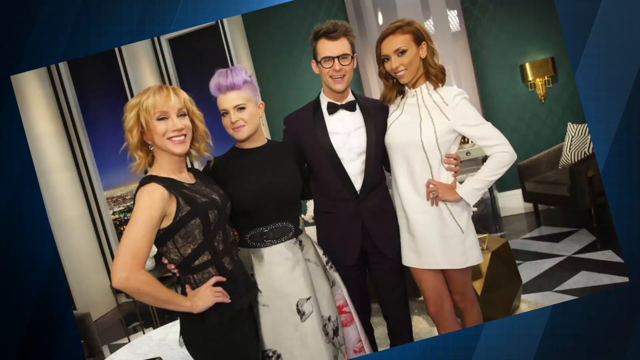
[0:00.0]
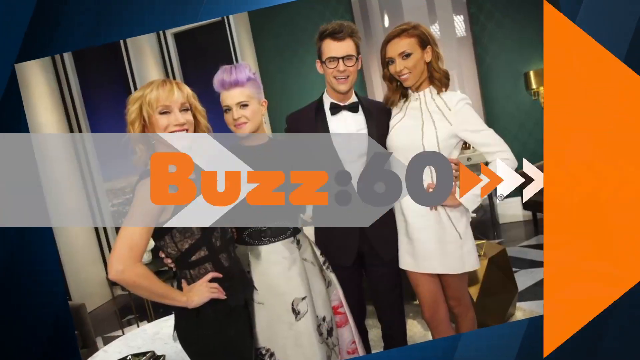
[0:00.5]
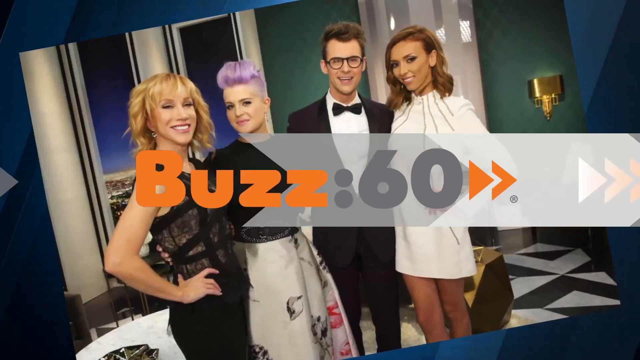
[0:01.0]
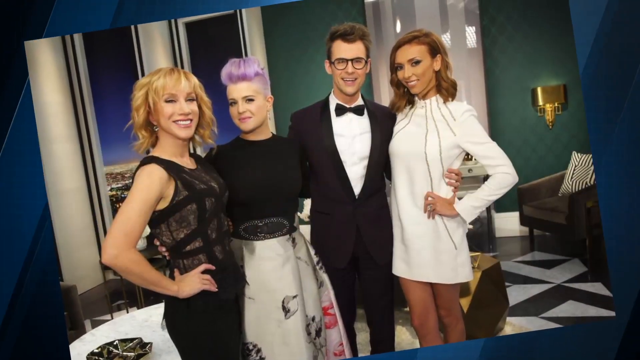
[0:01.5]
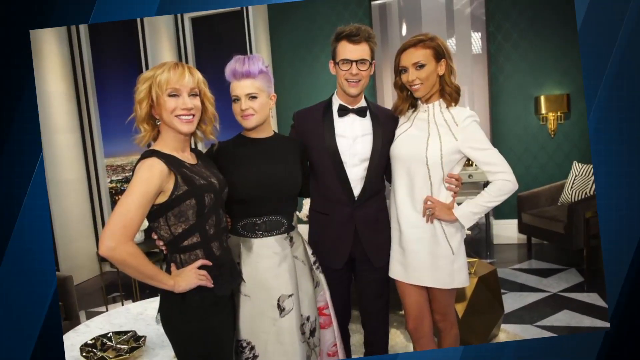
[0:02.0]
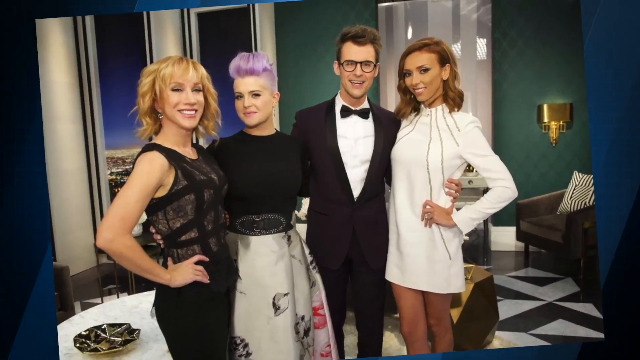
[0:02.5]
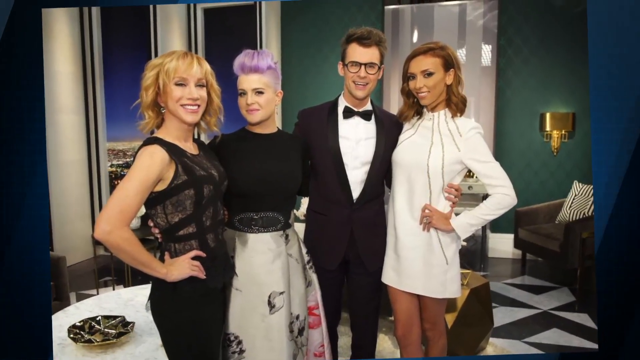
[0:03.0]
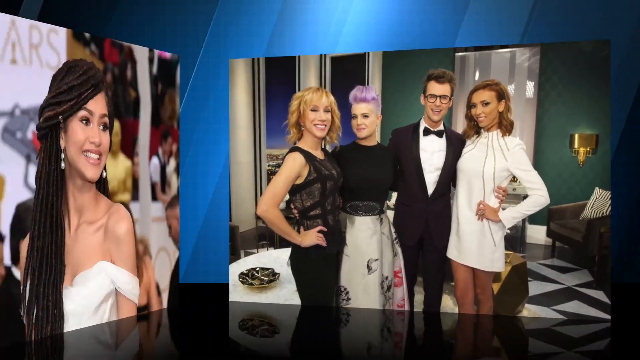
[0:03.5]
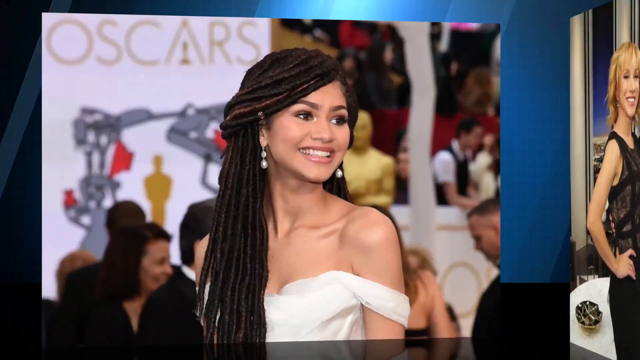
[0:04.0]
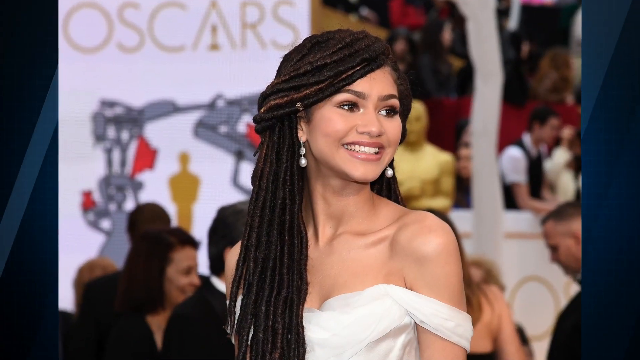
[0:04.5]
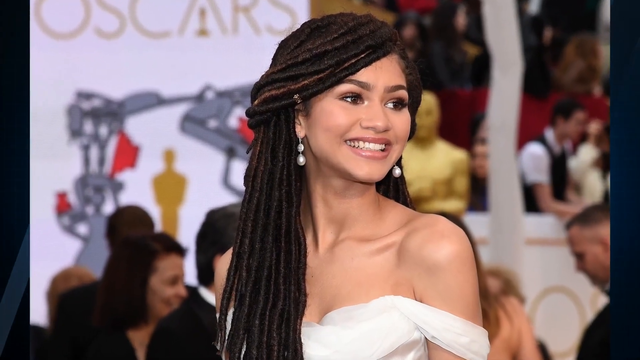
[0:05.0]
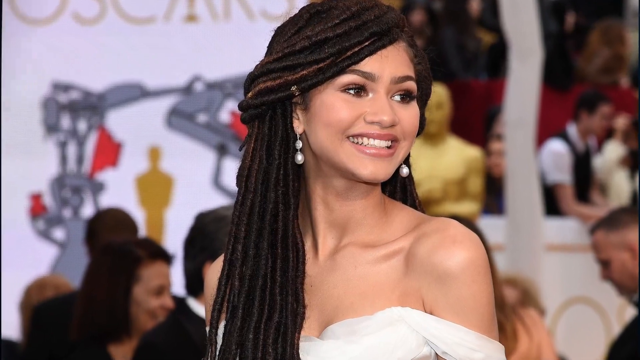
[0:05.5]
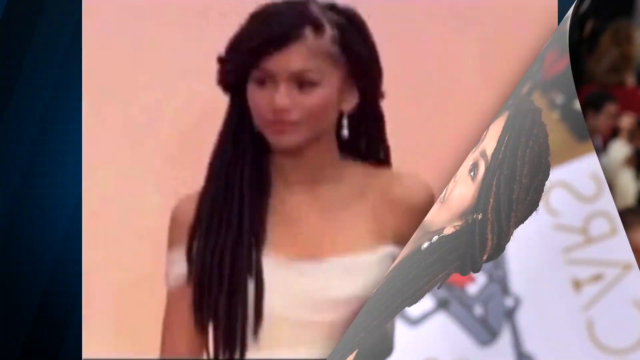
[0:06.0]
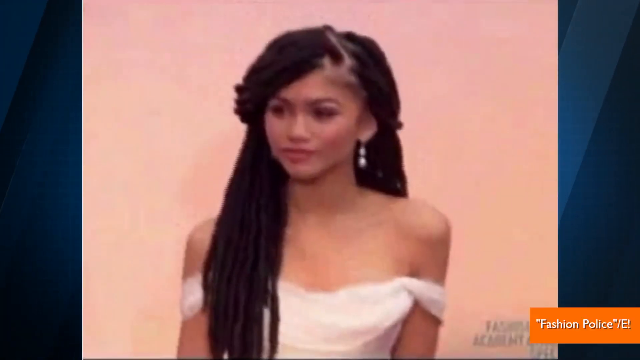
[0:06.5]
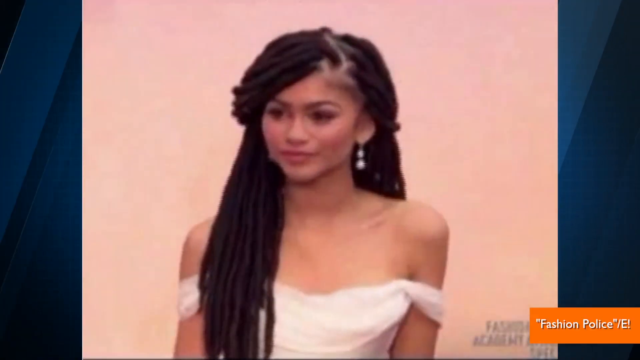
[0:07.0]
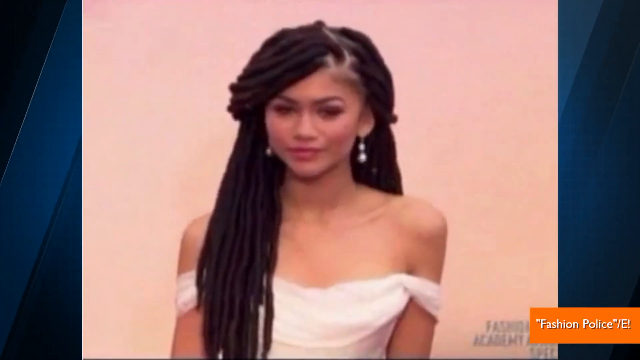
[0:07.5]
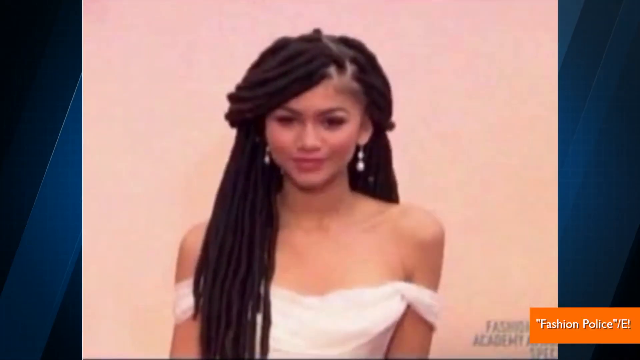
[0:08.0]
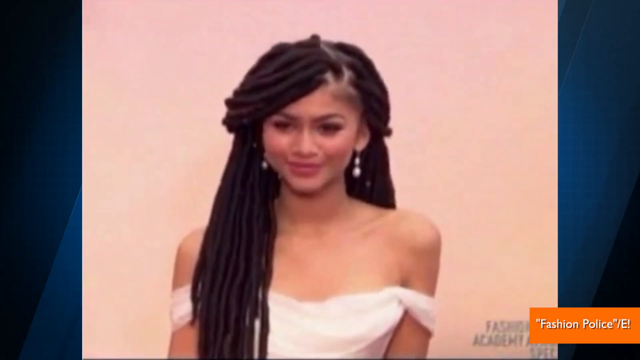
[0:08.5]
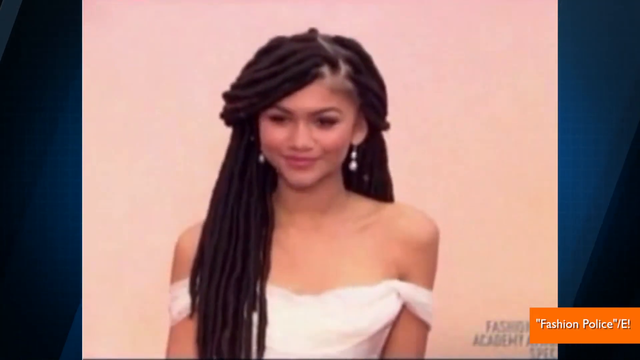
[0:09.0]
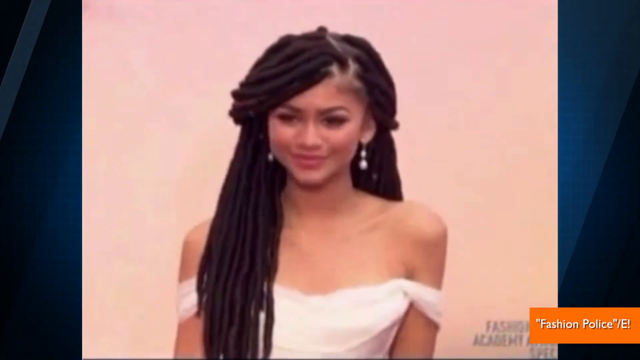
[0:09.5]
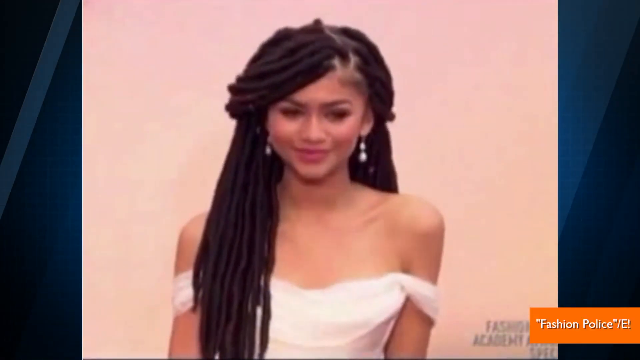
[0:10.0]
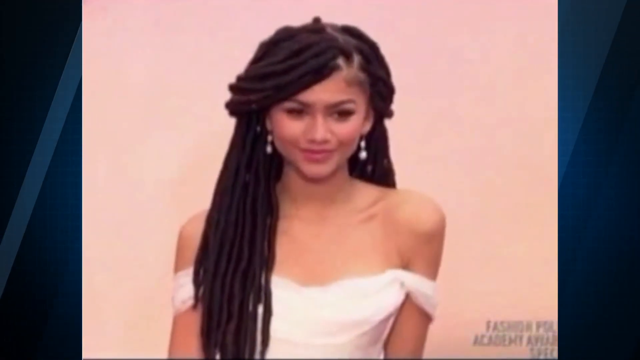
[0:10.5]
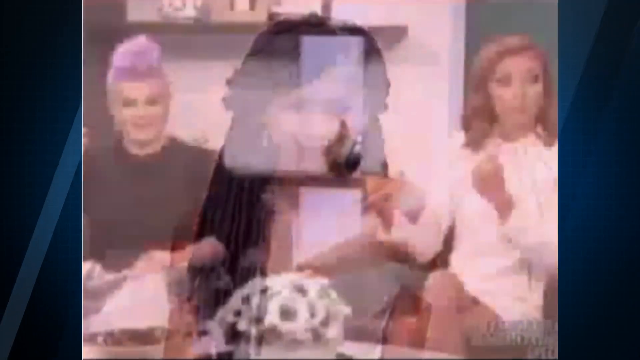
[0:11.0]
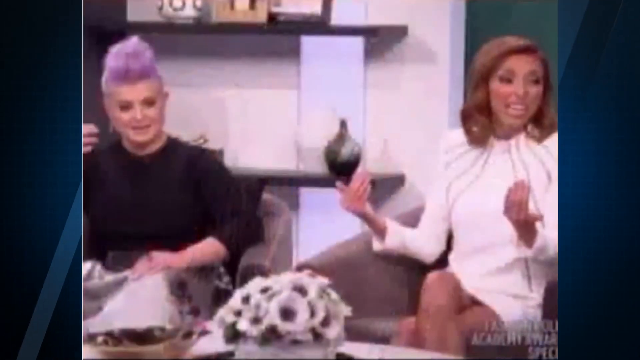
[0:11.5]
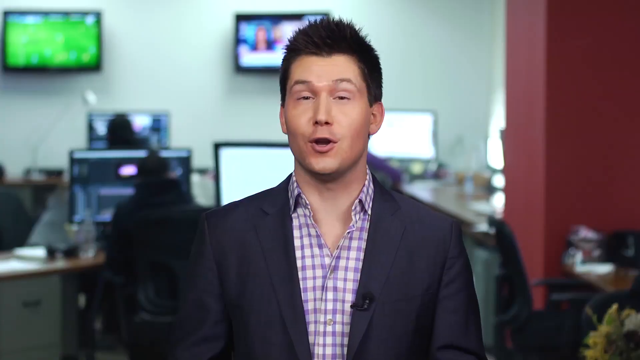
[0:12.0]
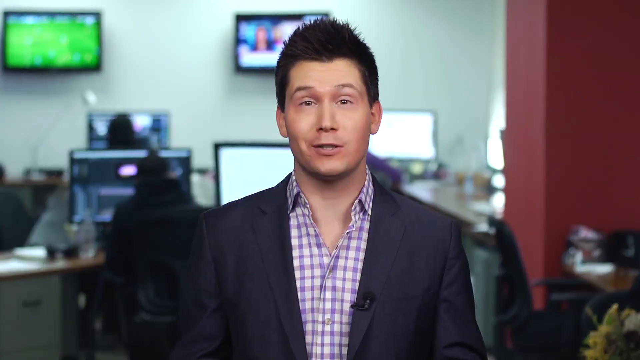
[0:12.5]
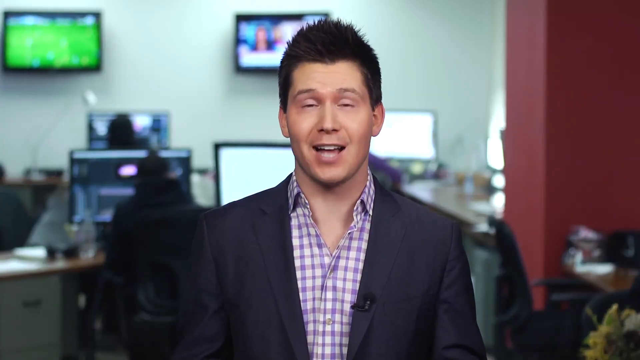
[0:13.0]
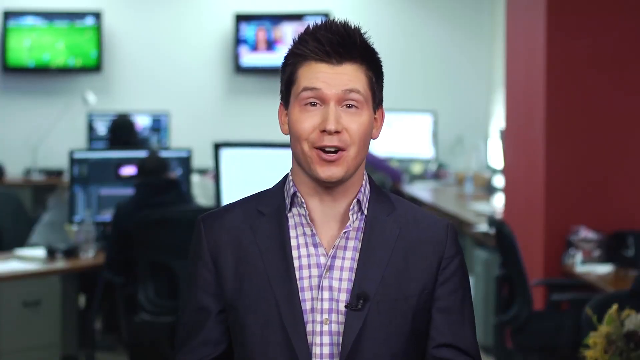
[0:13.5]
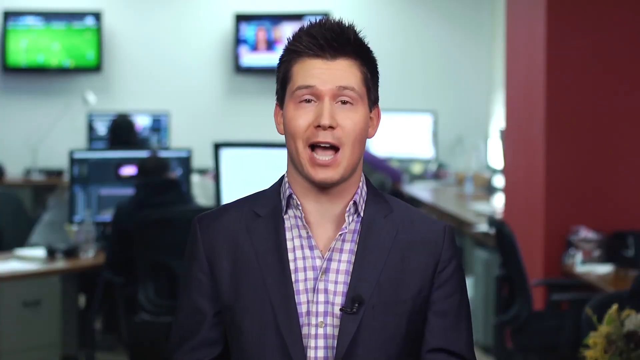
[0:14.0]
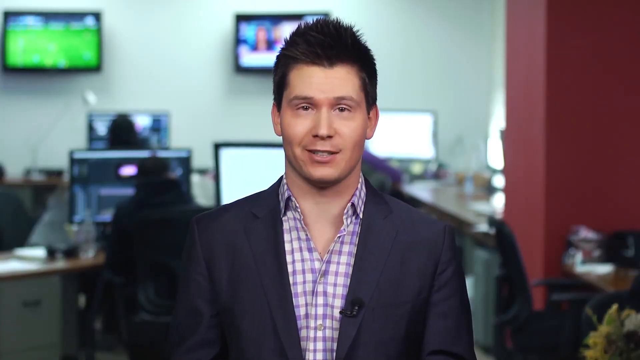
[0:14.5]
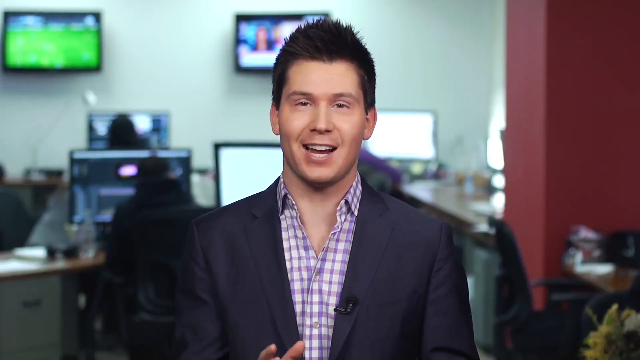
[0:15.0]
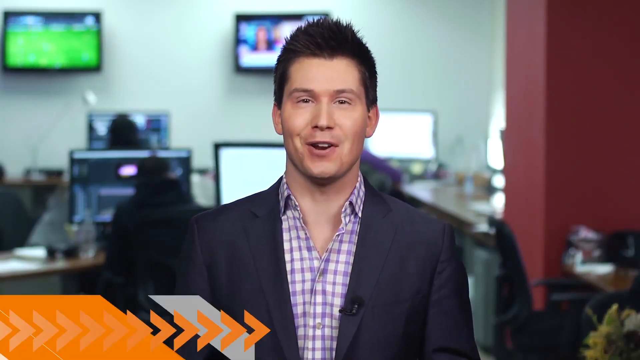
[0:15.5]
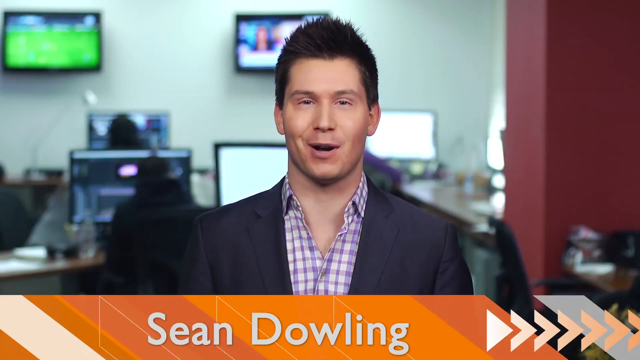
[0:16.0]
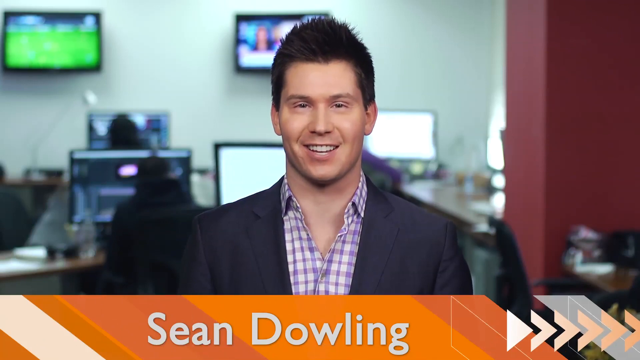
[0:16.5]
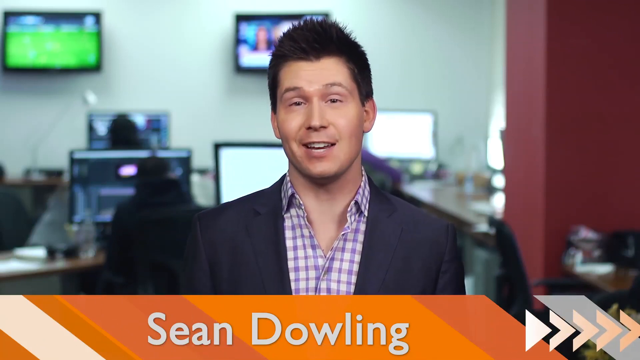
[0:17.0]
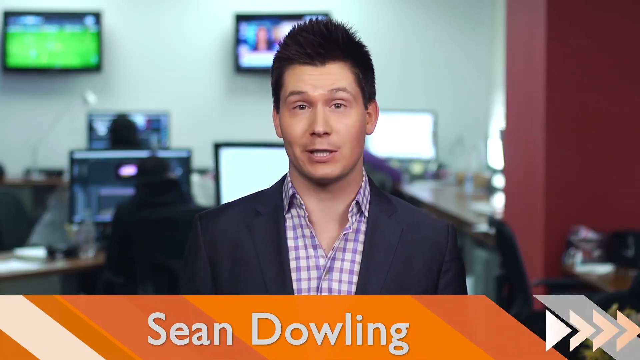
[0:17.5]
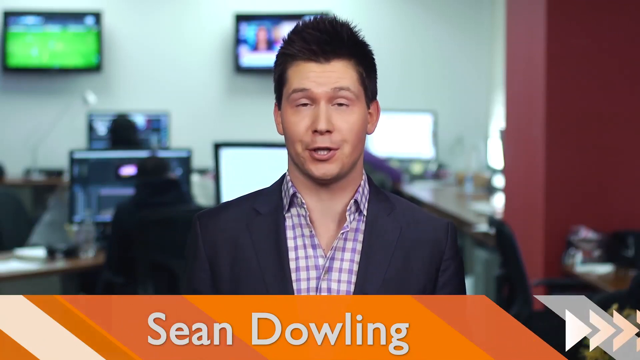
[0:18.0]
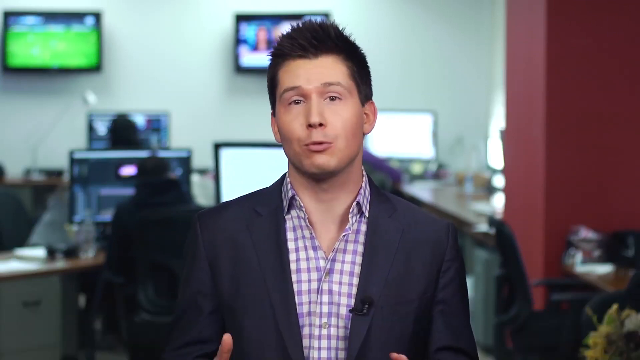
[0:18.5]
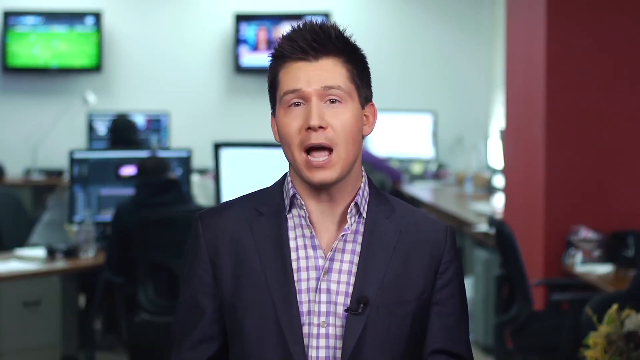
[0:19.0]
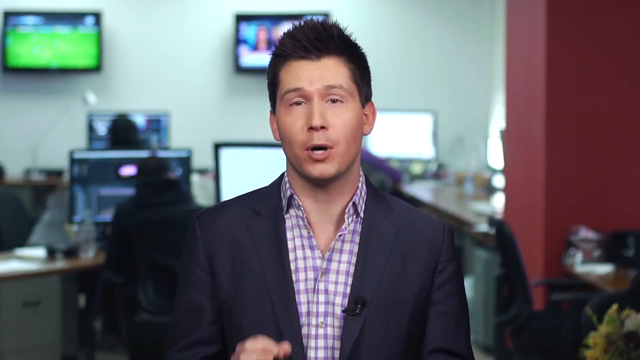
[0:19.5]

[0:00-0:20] The video opens on some ladies in what looks like a book whose page is being flipped, revealing four ladies, a man, and another lady with long hair and a white top; it is called Fashion Police. A reporter then appears, reporting about the Fashion Police, wearing a jacket and a striped shirt. Behind him are screens: one seems to show a news channel, and there is a big screen and a small screen. The reporter's name is Son Toling. The video then shows four people, three ladies and one man; the man has a bow tie and spectacles, one lady wears a white dress, and another has purple hair.